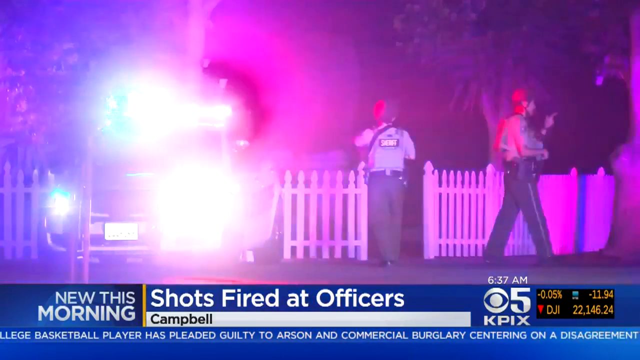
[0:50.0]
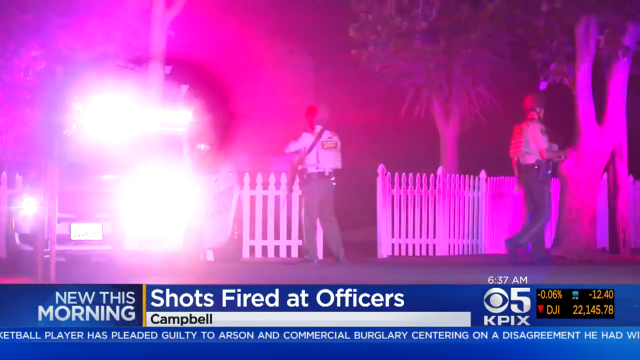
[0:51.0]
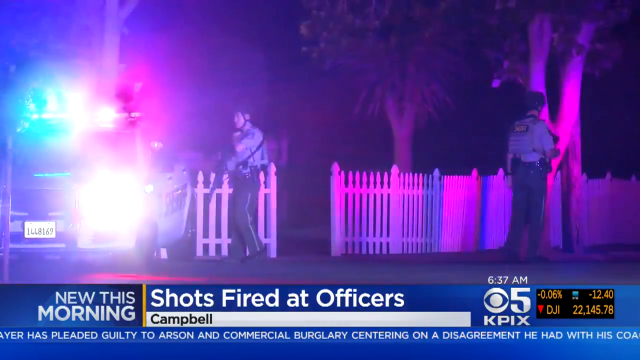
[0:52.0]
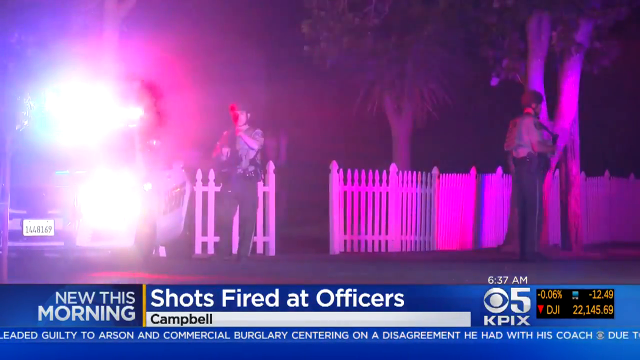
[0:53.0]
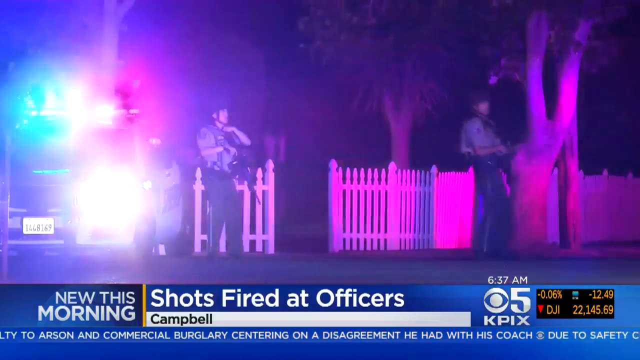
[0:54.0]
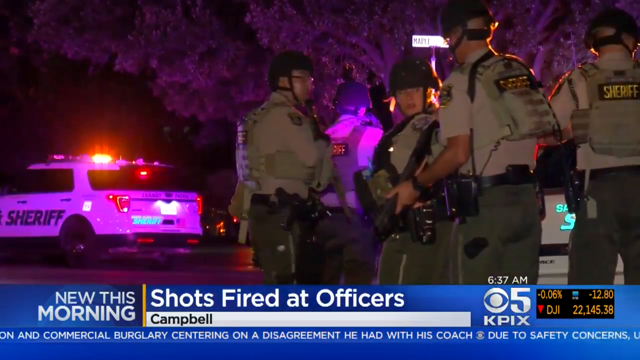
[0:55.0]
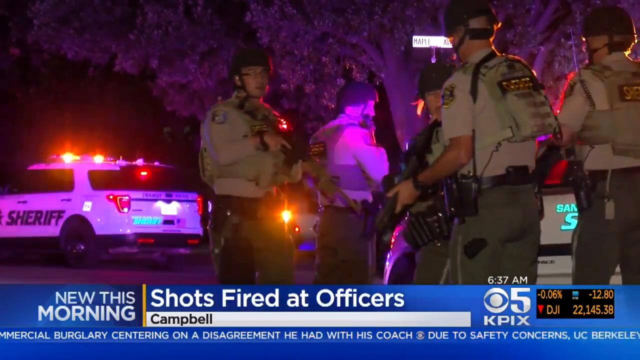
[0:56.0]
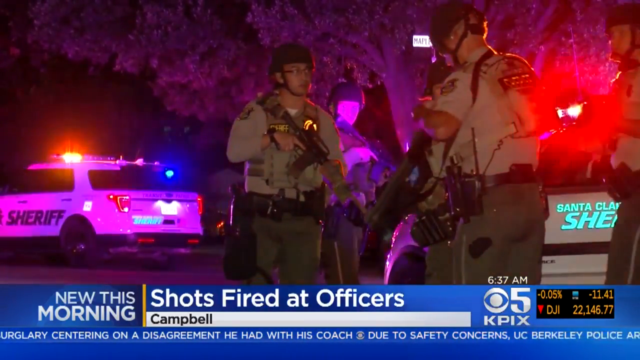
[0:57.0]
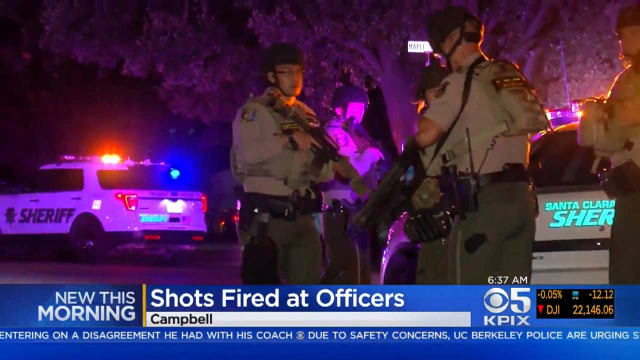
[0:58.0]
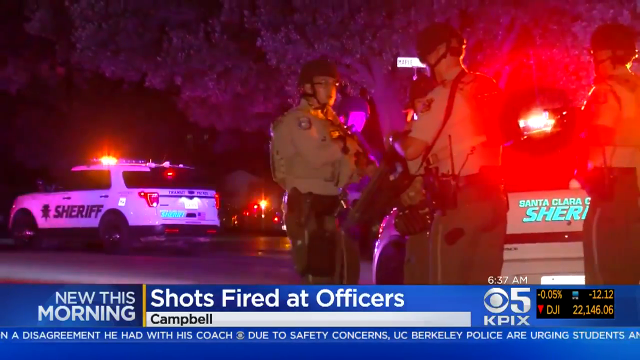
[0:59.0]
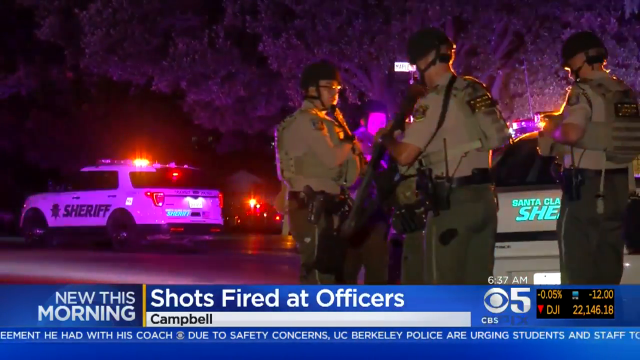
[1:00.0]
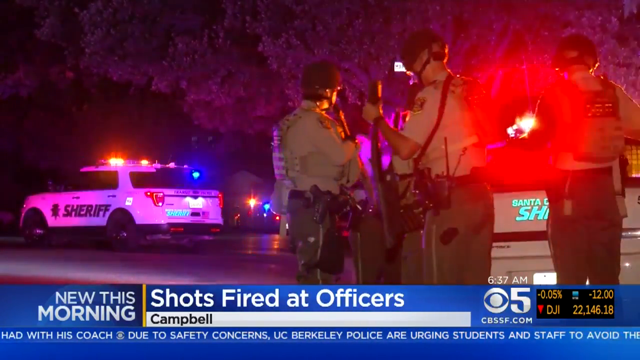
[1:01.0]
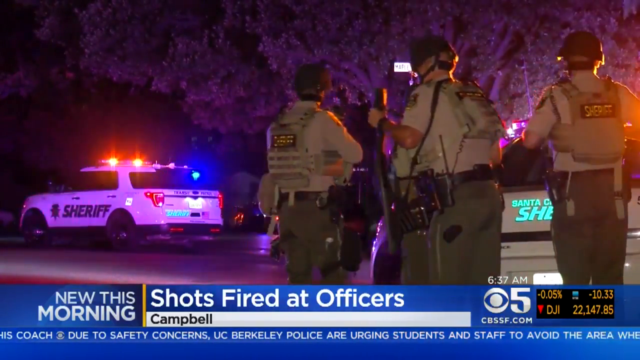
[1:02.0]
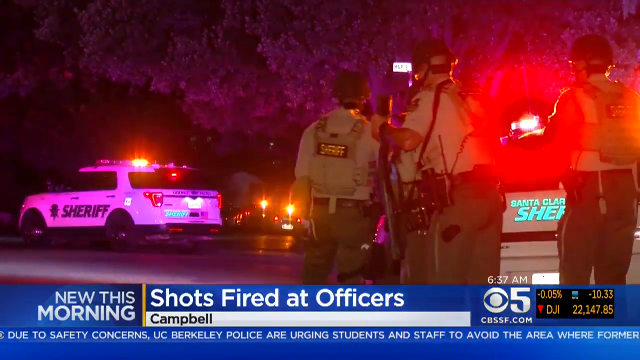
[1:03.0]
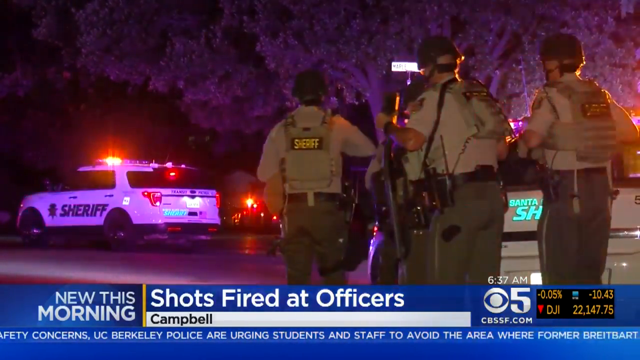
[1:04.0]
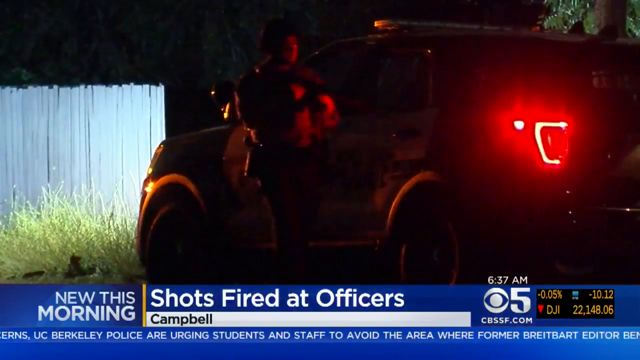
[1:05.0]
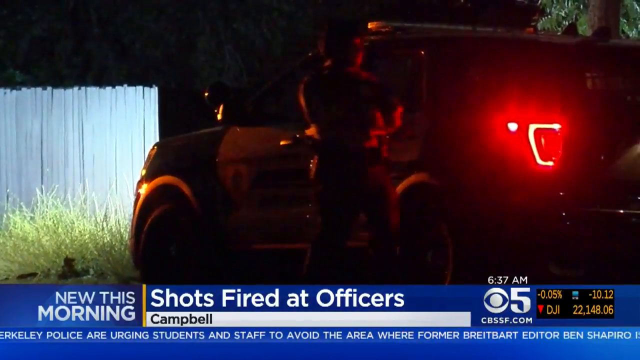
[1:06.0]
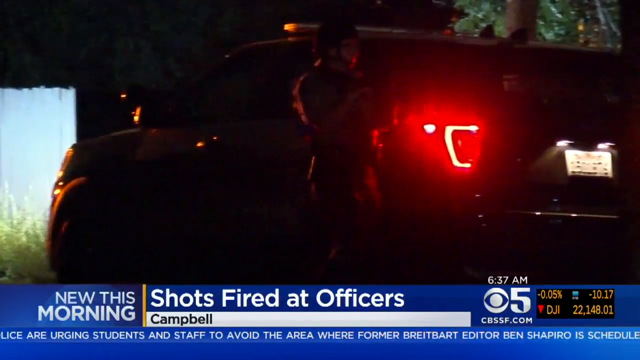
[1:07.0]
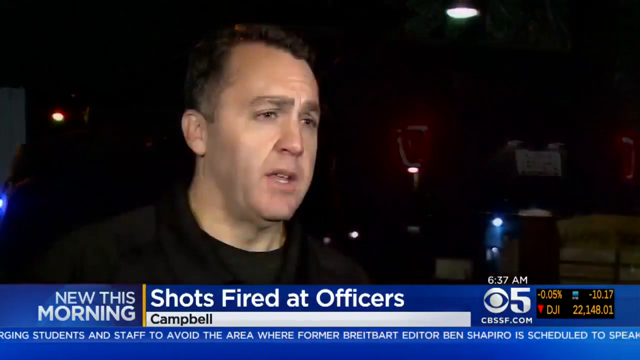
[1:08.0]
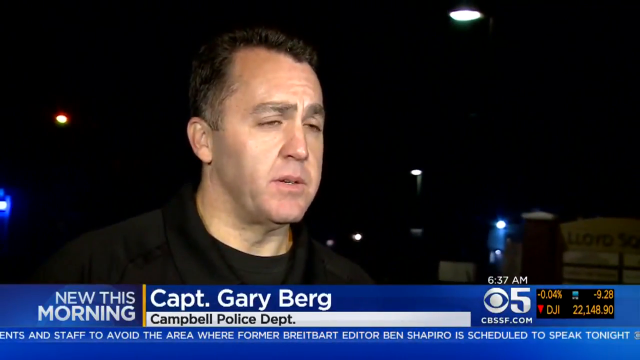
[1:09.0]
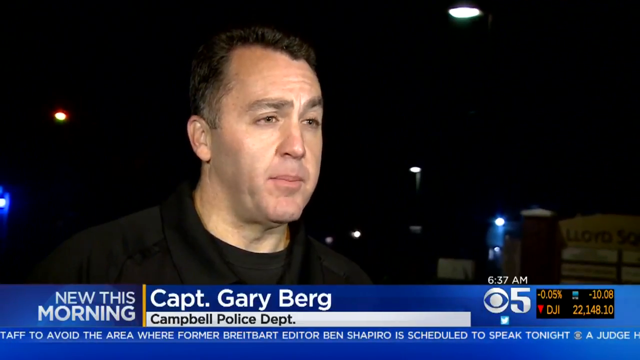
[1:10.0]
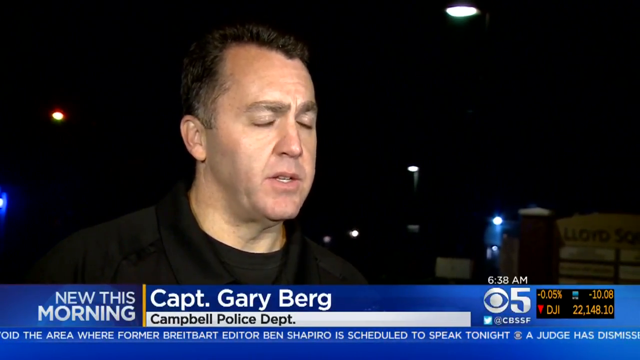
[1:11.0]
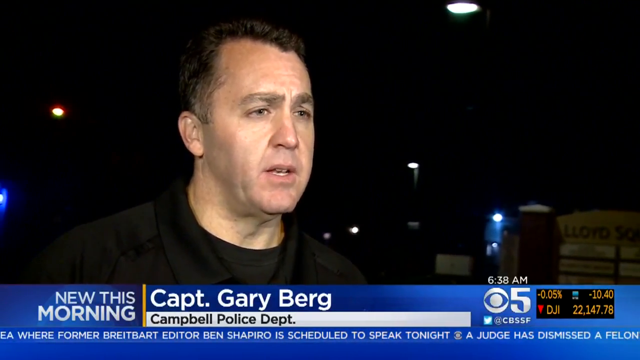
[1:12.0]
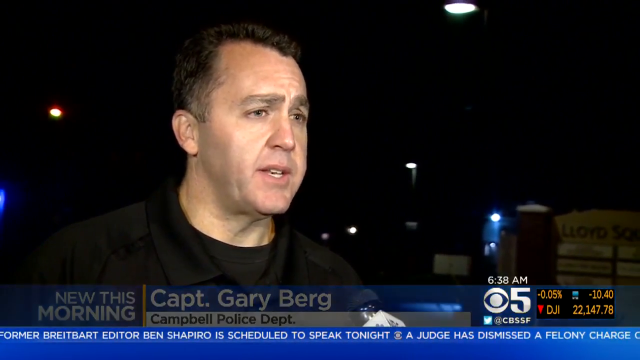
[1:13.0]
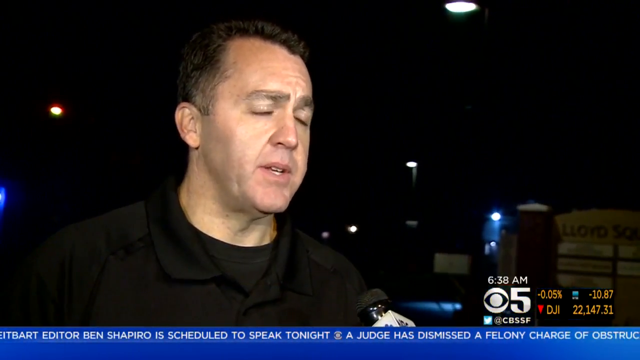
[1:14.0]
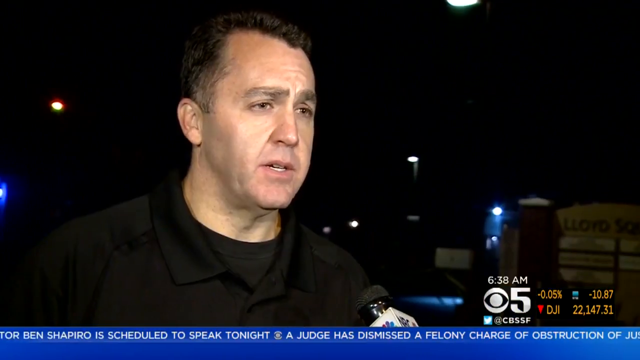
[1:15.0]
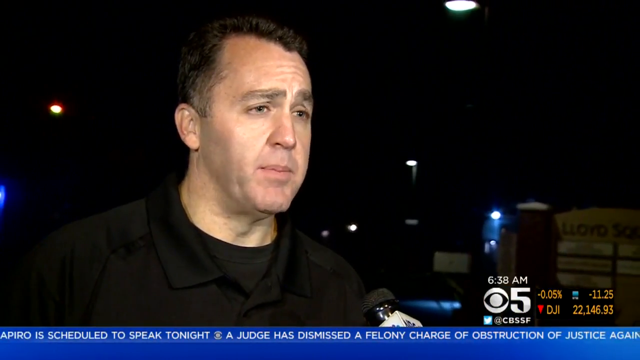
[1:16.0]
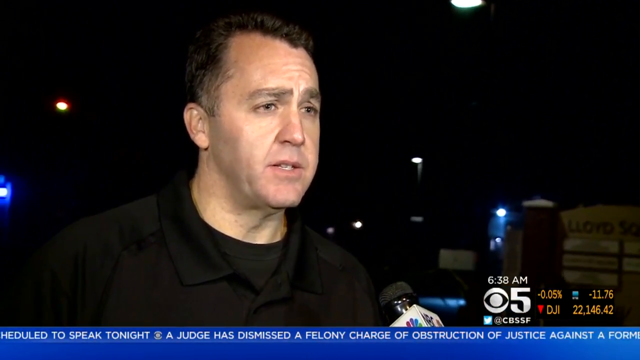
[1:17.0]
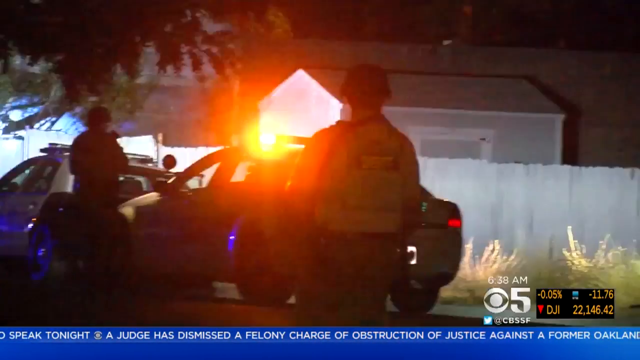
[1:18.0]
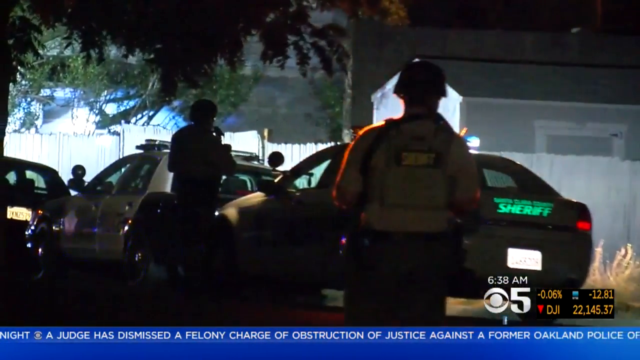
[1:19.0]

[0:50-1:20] The officers stand carrying their big guns. There are cars with wheels like chariots, and a black car. The captain of the Campbell Department of Police, Gary Berg, is interviewed; he is white, with short blackish hair, and wears a black t-shirt. The police wear helmets that go around the chin and the back of the head. There are many trees around the officers and a white wooden fence around the area, which seems to be a park.